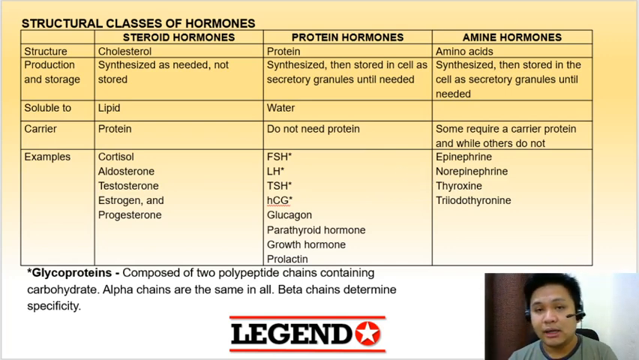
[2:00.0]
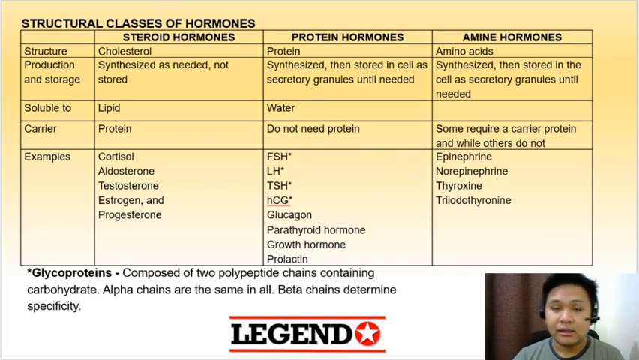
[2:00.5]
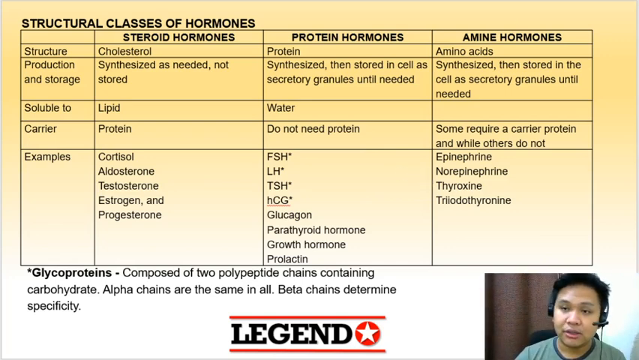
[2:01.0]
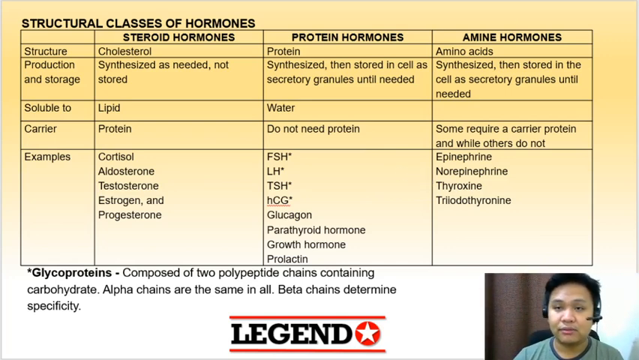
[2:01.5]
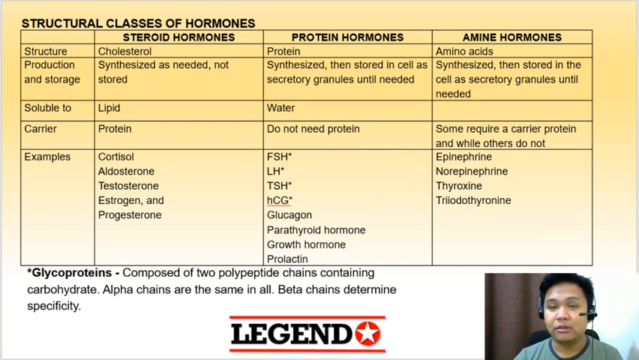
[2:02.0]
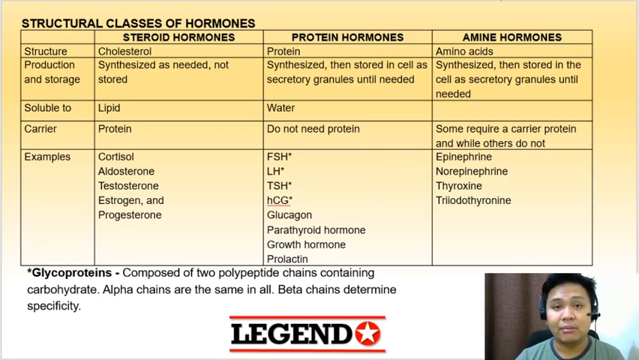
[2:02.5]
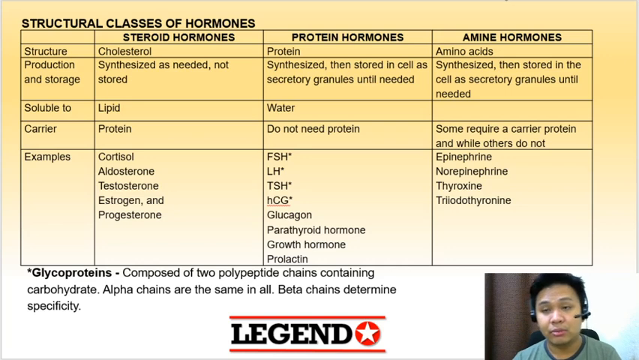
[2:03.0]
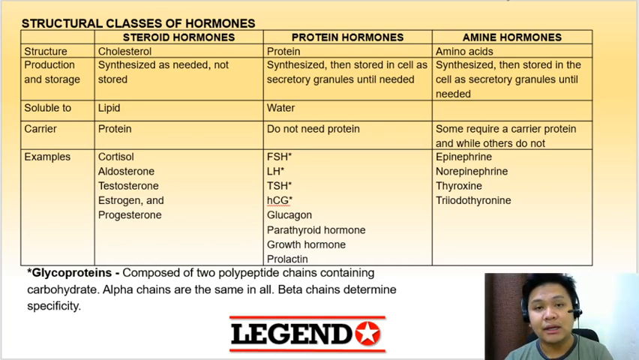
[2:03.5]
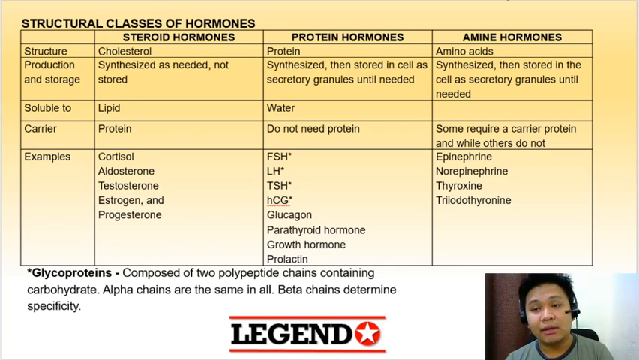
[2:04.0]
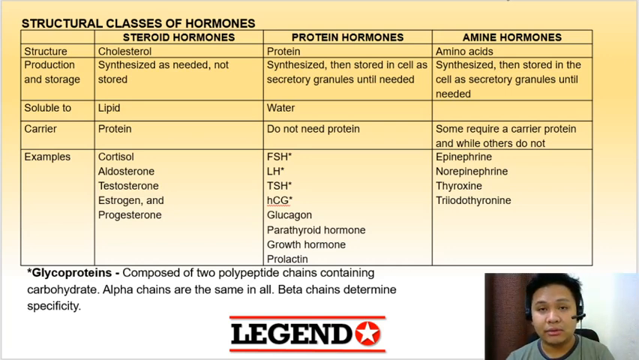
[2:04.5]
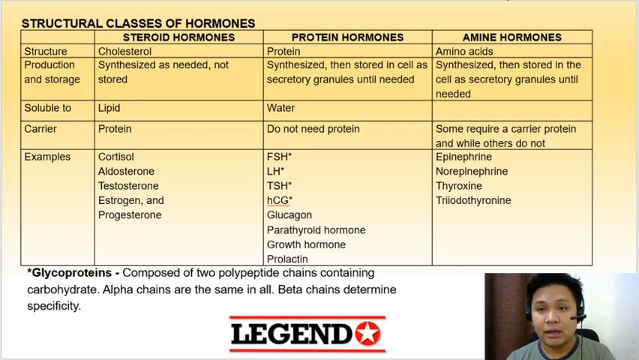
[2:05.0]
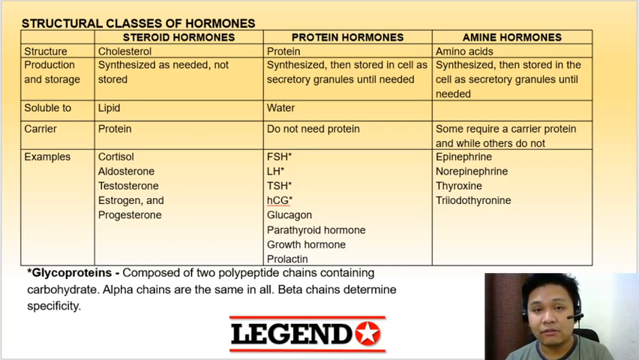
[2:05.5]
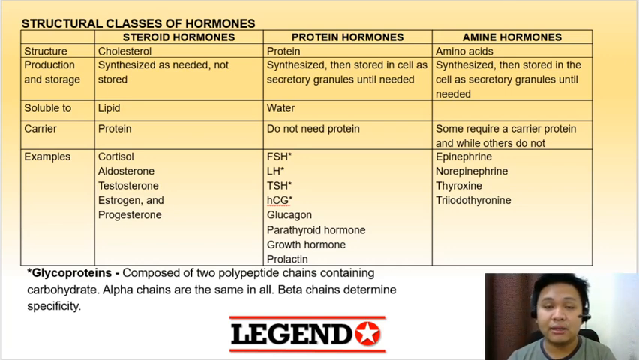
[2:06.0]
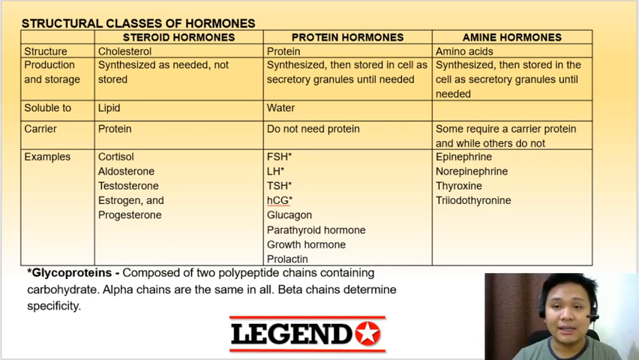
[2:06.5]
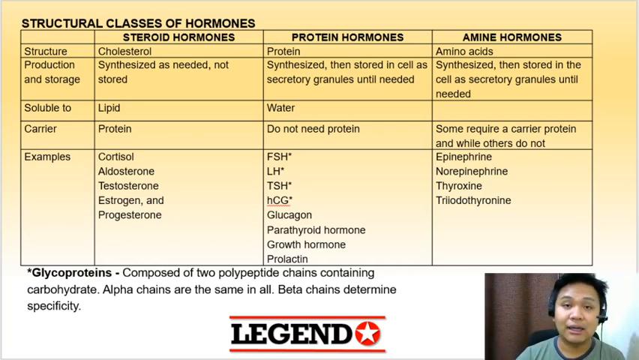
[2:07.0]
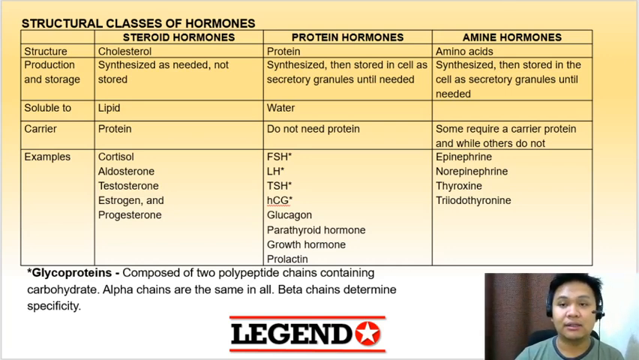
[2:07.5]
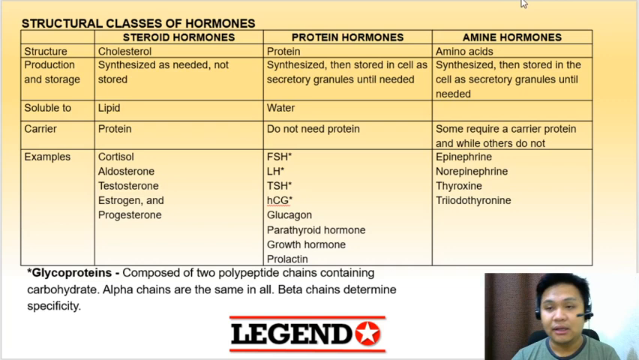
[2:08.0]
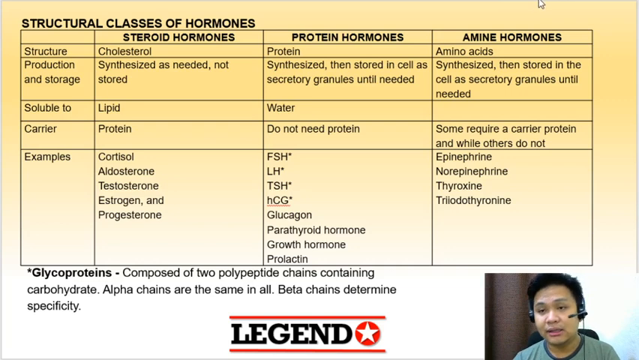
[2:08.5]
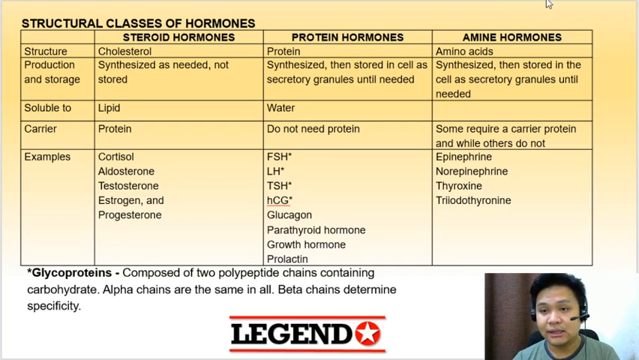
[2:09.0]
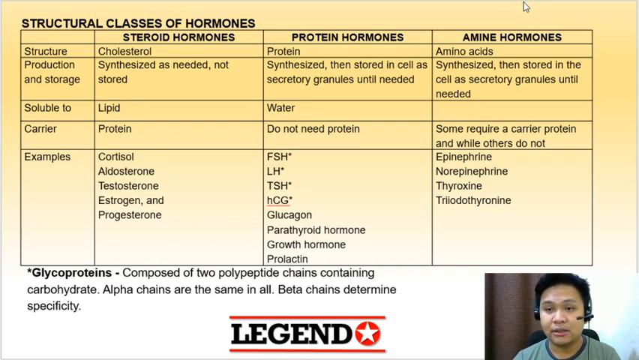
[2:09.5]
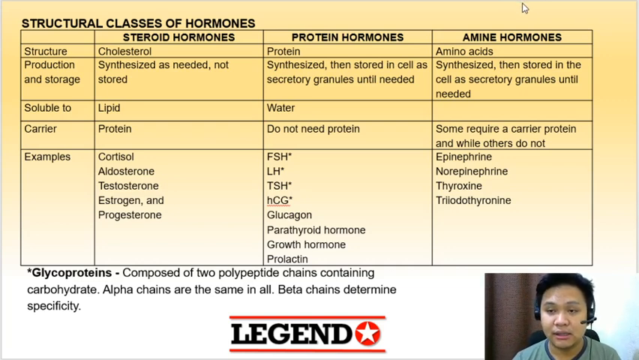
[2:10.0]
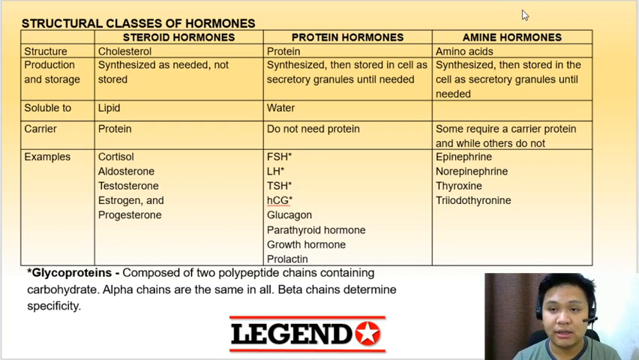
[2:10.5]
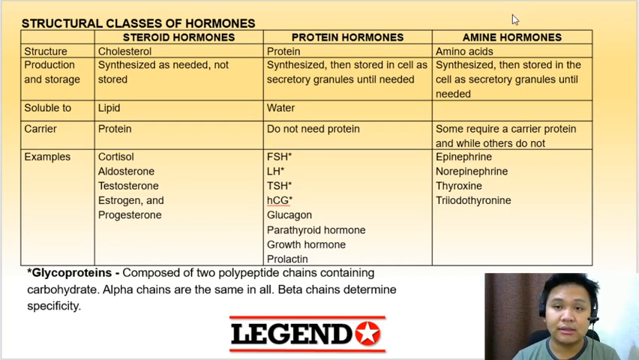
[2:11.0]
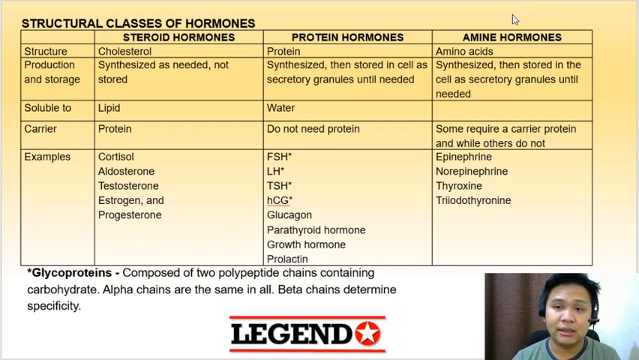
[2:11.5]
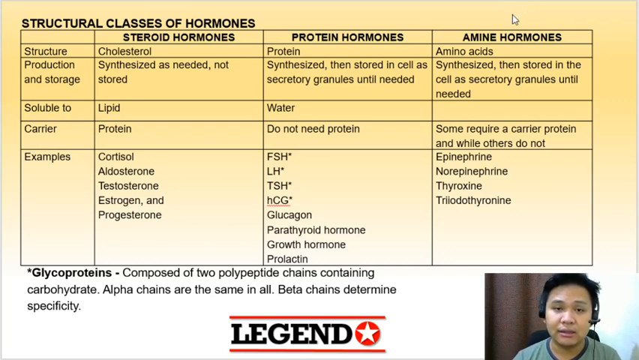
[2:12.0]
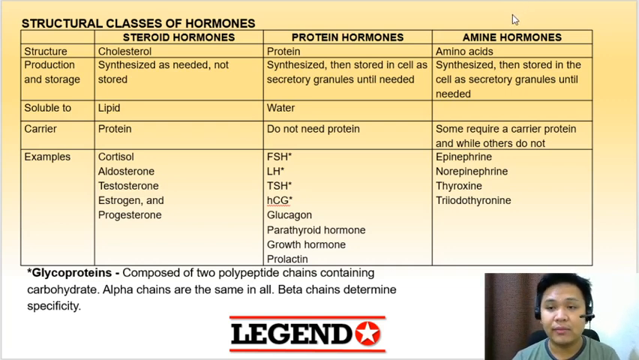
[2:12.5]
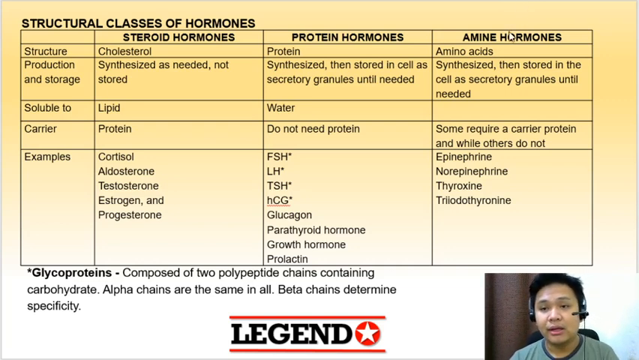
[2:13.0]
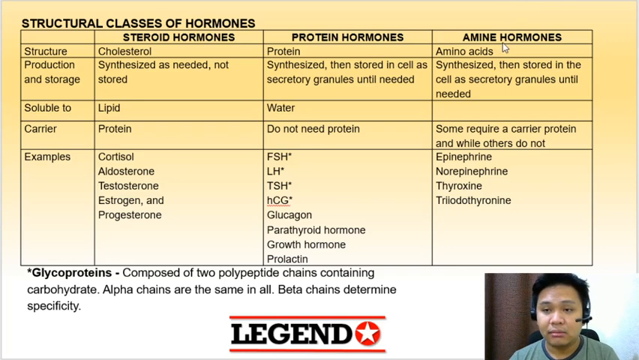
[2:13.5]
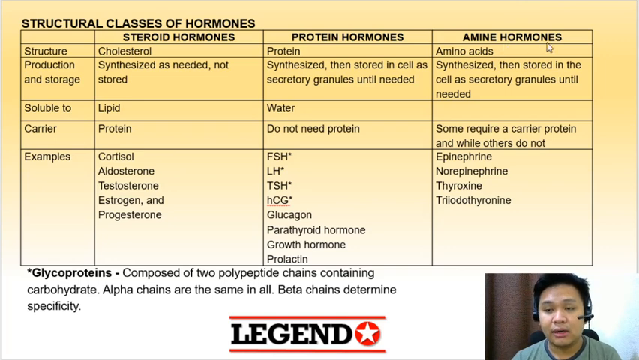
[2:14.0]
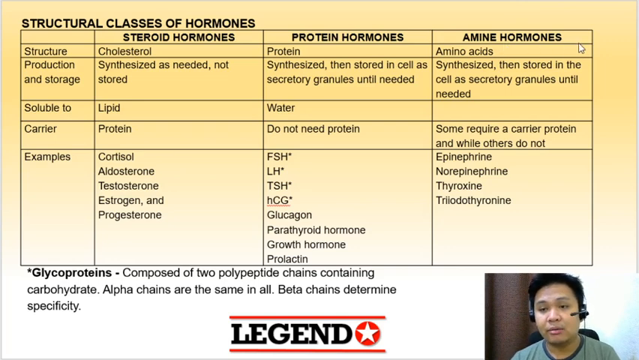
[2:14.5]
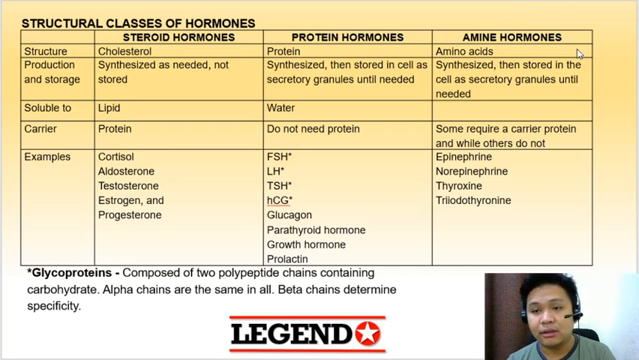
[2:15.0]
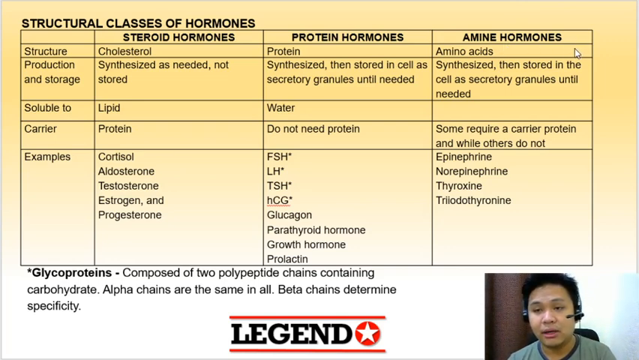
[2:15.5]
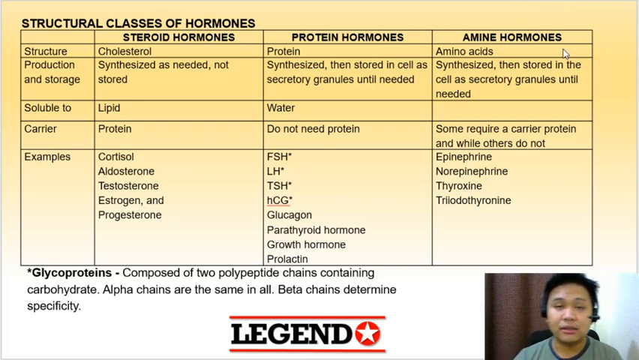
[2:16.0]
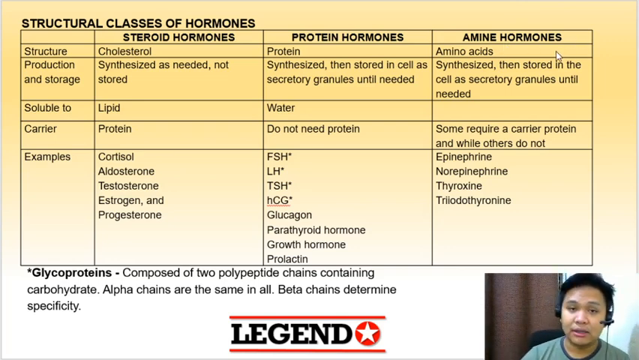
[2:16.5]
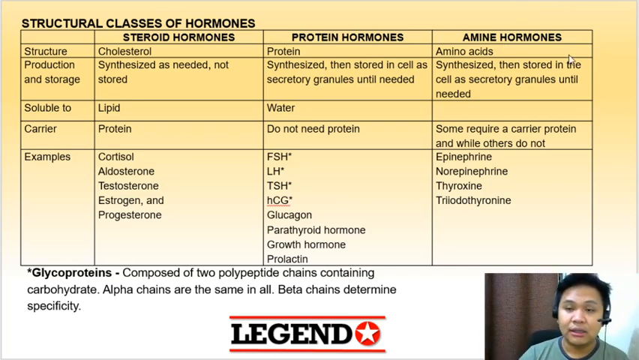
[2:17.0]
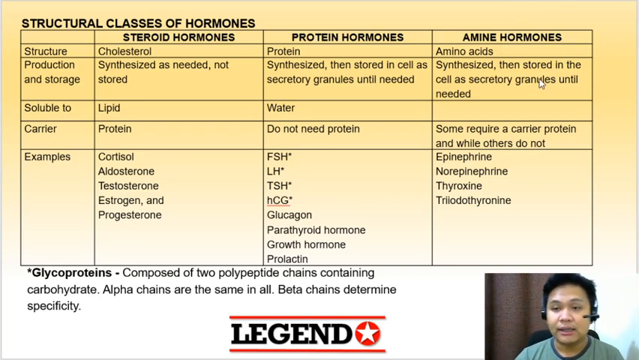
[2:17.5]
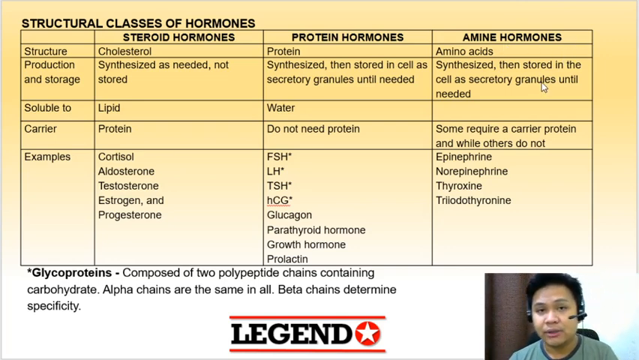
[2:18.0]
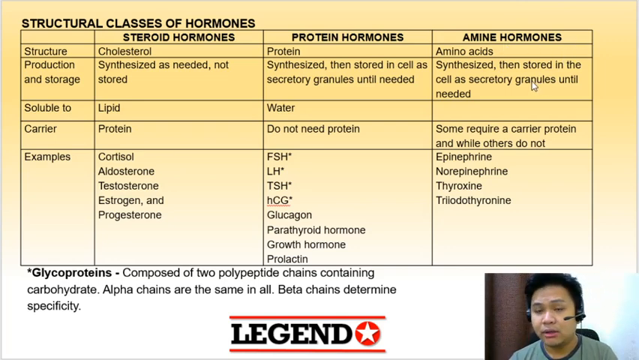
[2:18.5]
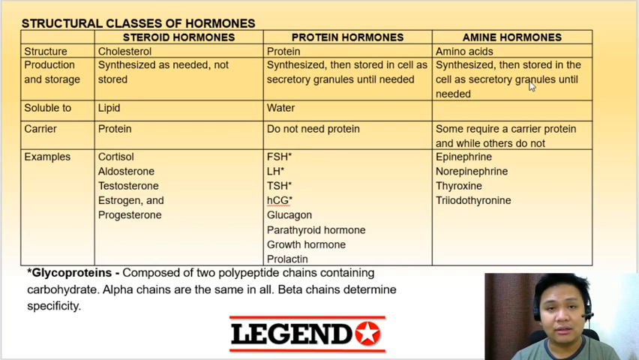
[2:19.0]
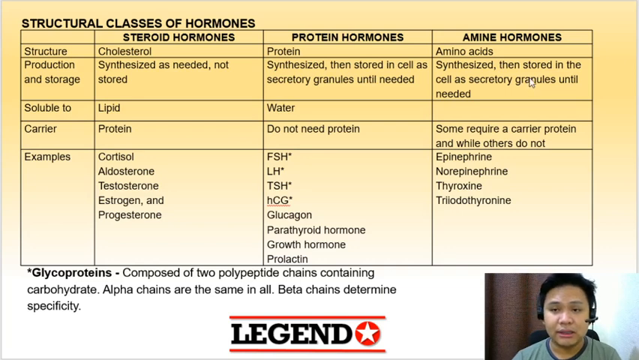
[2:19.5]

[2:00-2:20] The table on the structural classes of hormones remains on screen, with a man in the bottom right corner who appears to be talking about the information. It covers steroid hormones, protein hormones and amine hormones, giving the production and storage, solubility, carrier and plenty of examples of each. For steroid hormones, the structure is cholesterol, production and storage is "synthesized as needed, not stored", they are soluble to lipids, the carrier is protein, and the examples listed are cortisol, aldosterone, testosterone, estrogen and progesterone. Information is also given for protein hormones and amine hormones. The man appears to be sharing his screen, as the little mouse arrow moves about on the screen.